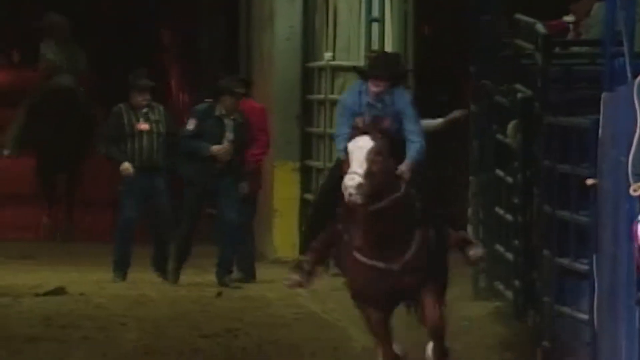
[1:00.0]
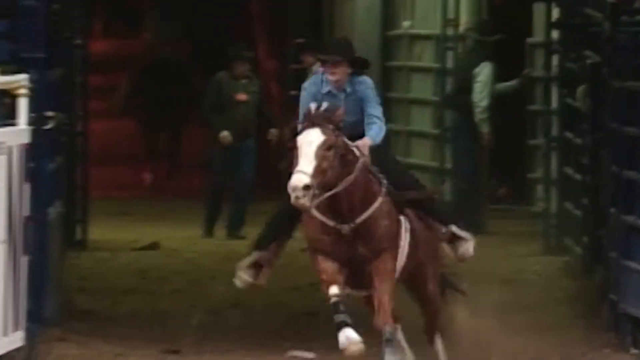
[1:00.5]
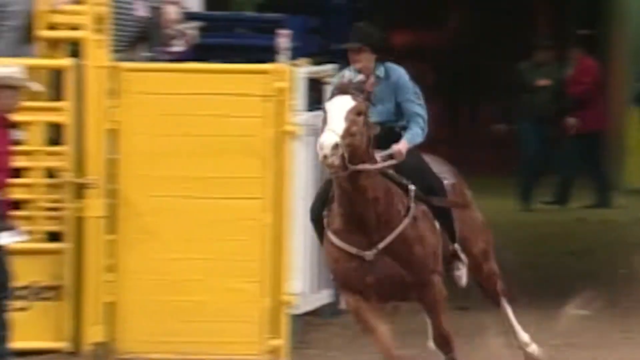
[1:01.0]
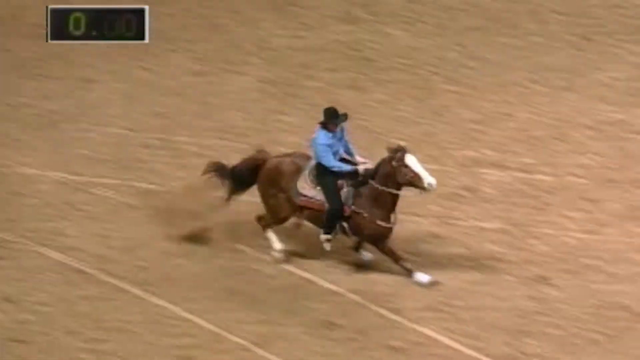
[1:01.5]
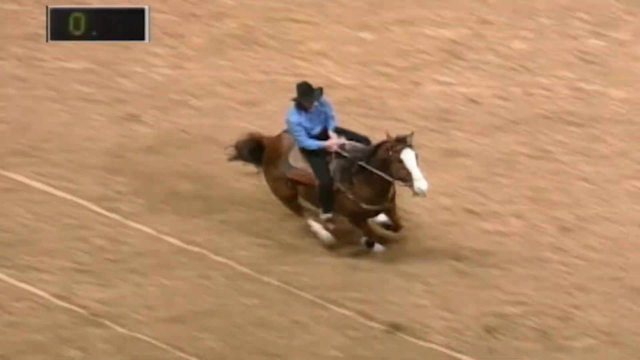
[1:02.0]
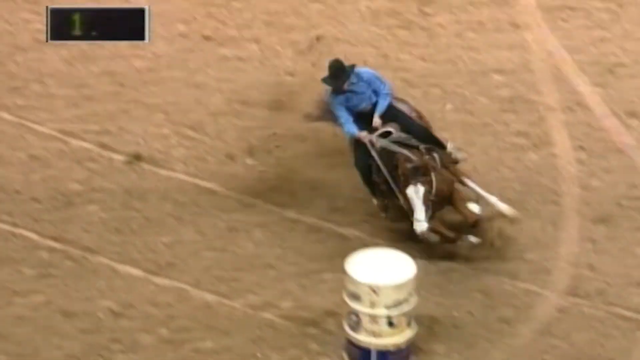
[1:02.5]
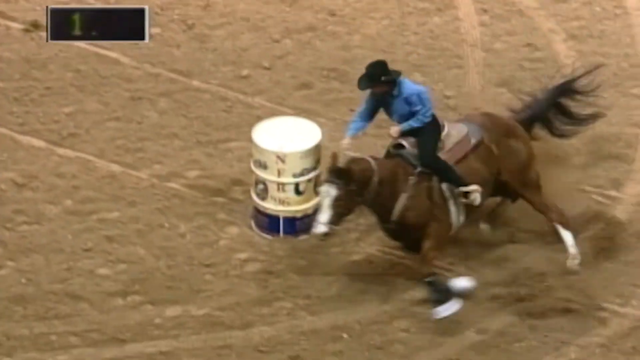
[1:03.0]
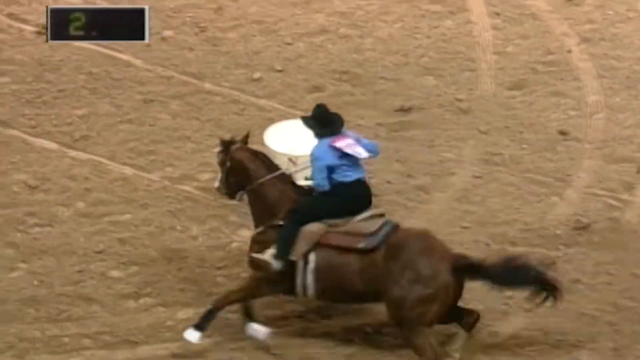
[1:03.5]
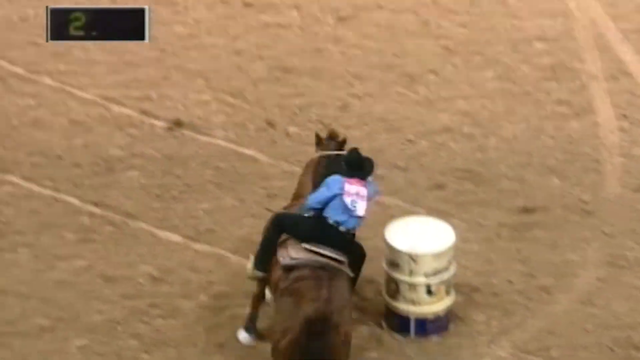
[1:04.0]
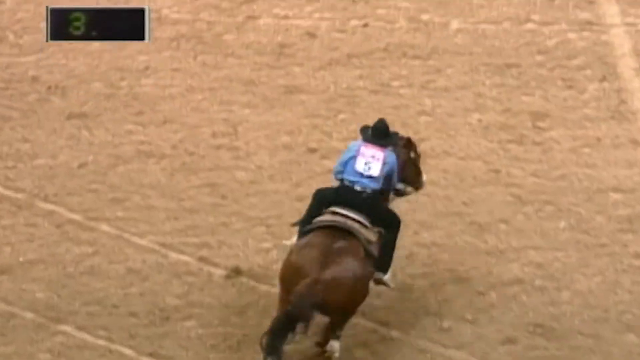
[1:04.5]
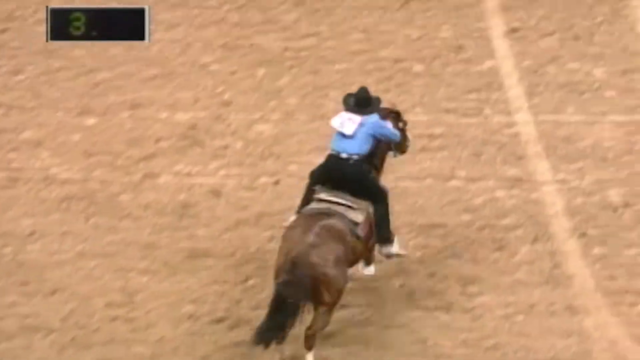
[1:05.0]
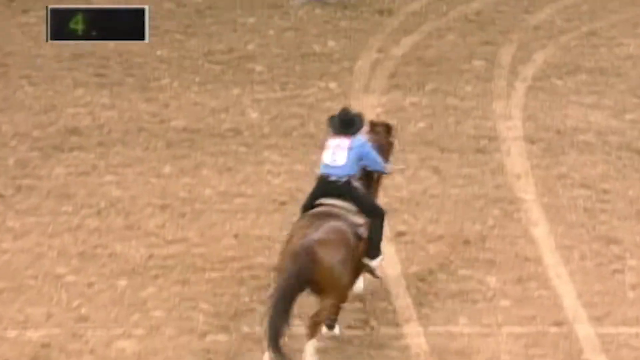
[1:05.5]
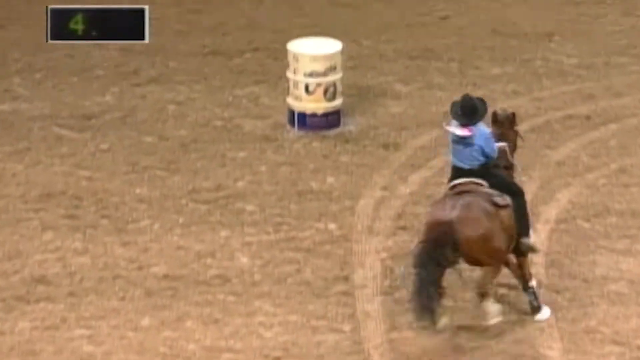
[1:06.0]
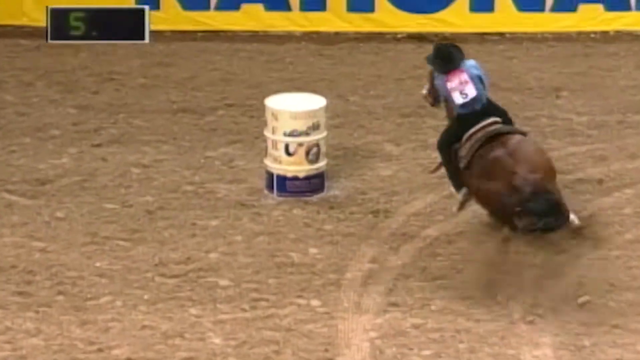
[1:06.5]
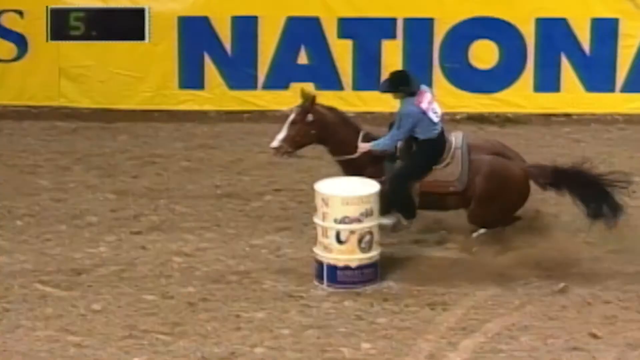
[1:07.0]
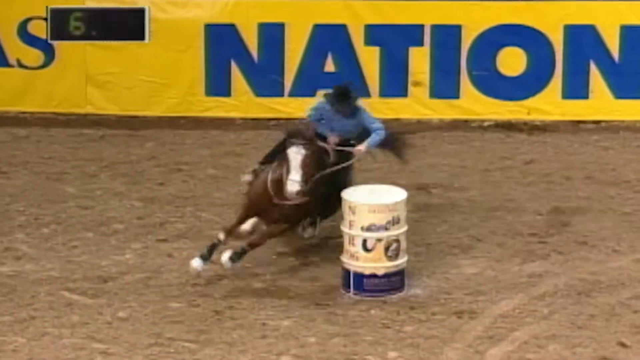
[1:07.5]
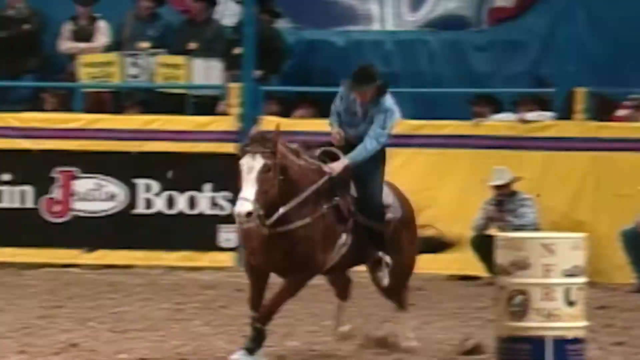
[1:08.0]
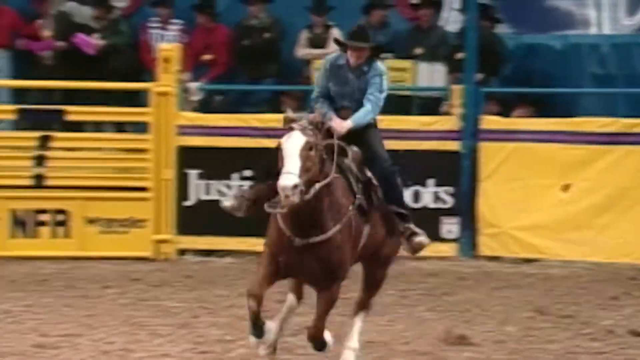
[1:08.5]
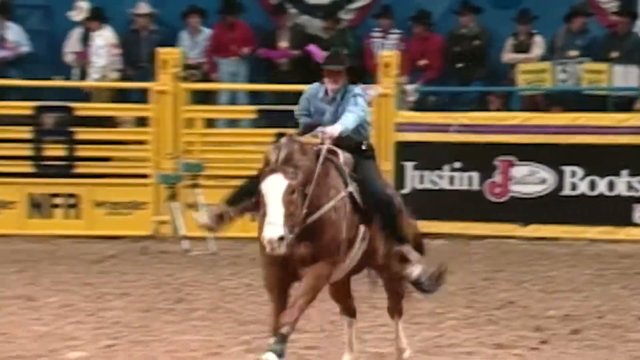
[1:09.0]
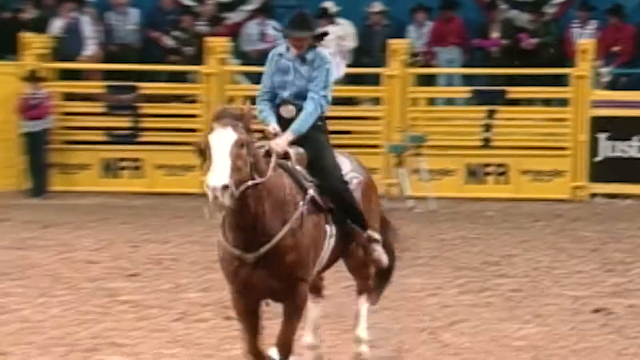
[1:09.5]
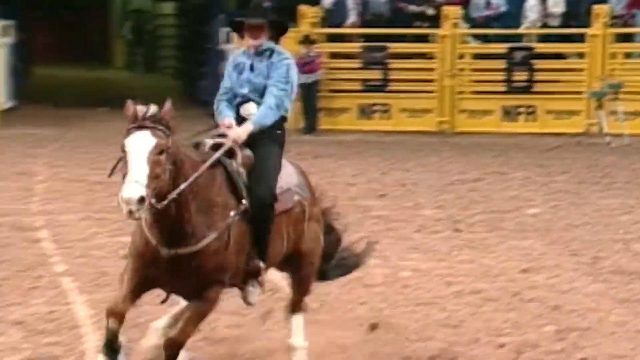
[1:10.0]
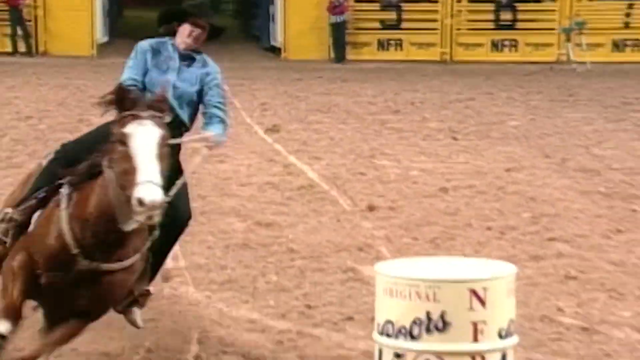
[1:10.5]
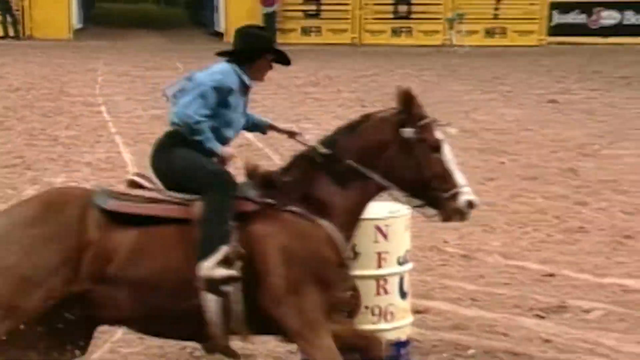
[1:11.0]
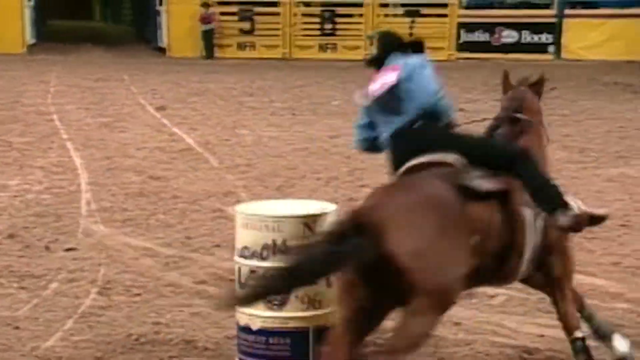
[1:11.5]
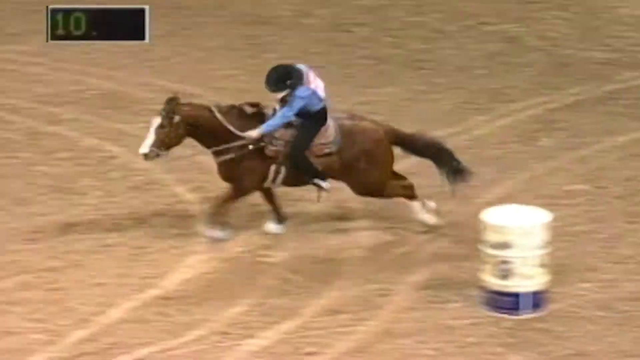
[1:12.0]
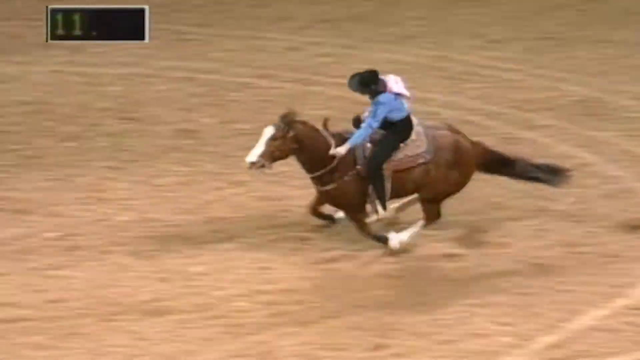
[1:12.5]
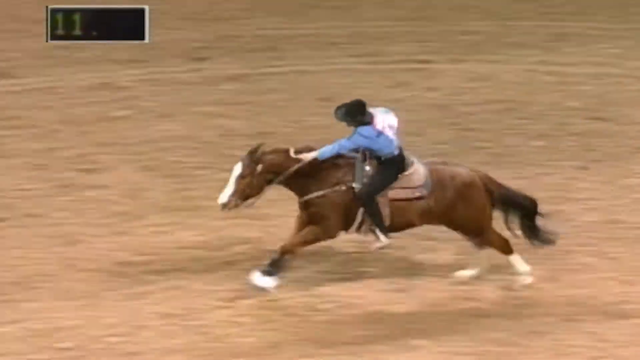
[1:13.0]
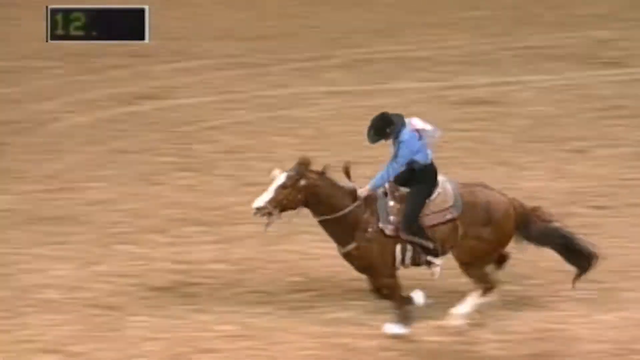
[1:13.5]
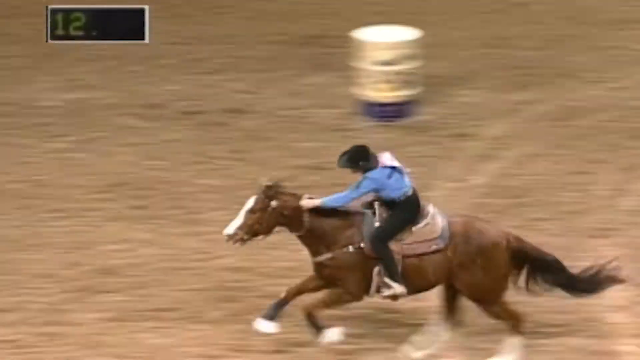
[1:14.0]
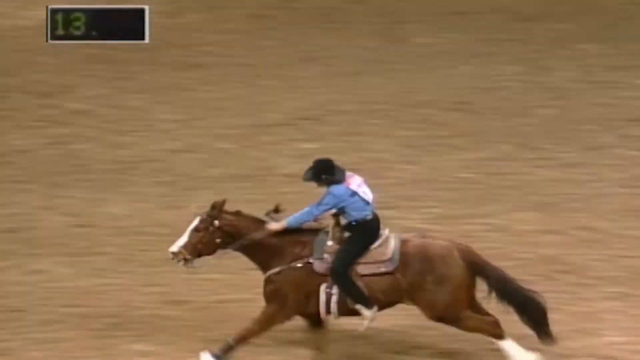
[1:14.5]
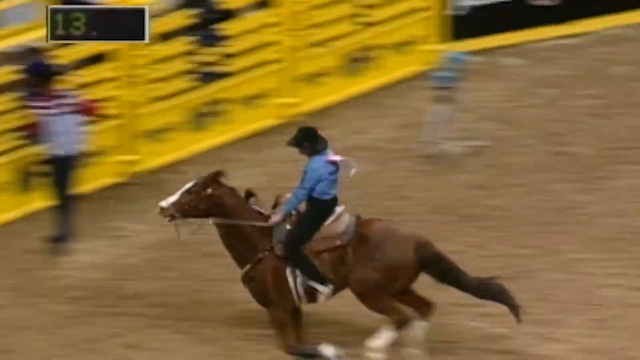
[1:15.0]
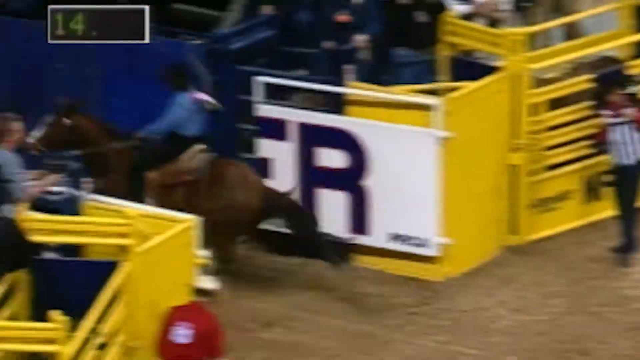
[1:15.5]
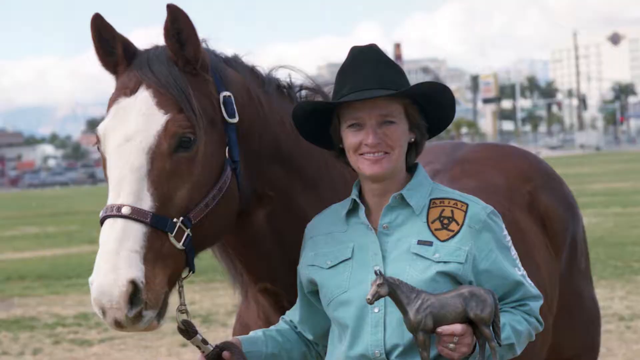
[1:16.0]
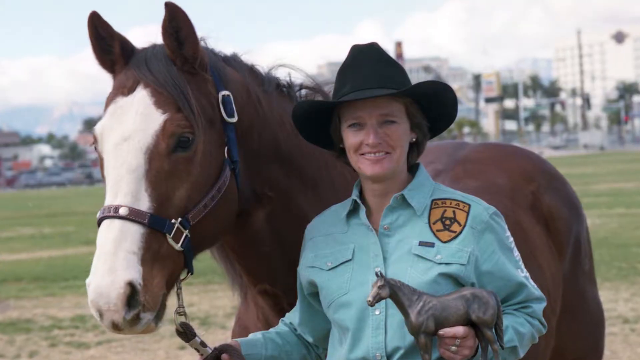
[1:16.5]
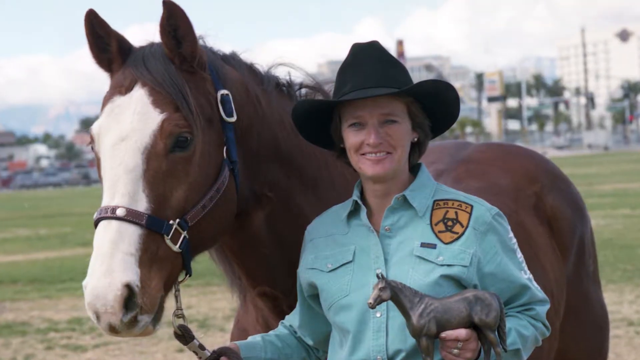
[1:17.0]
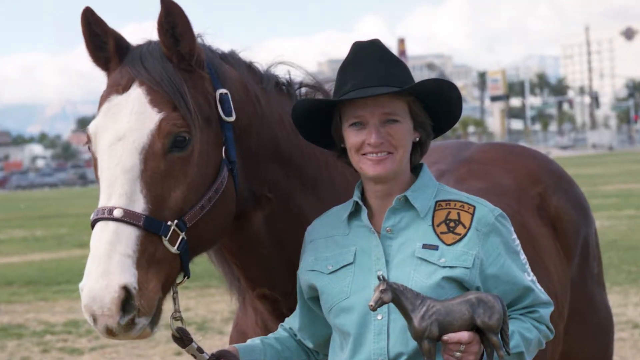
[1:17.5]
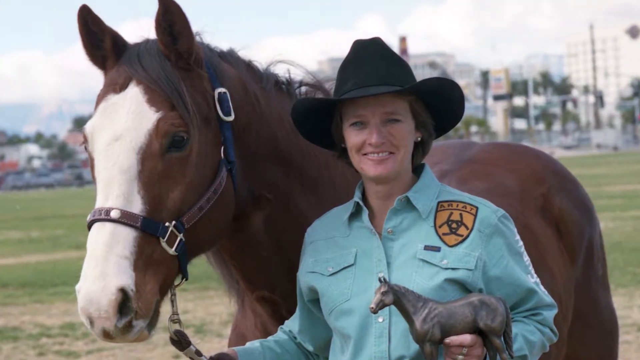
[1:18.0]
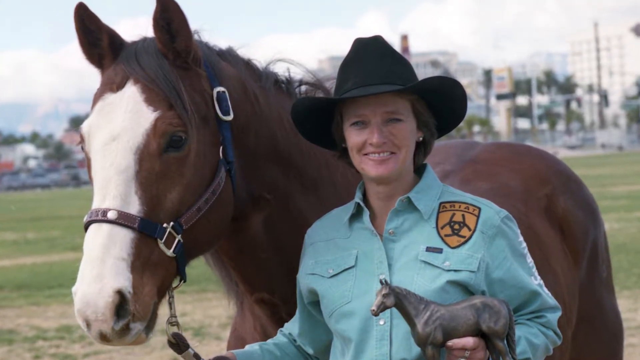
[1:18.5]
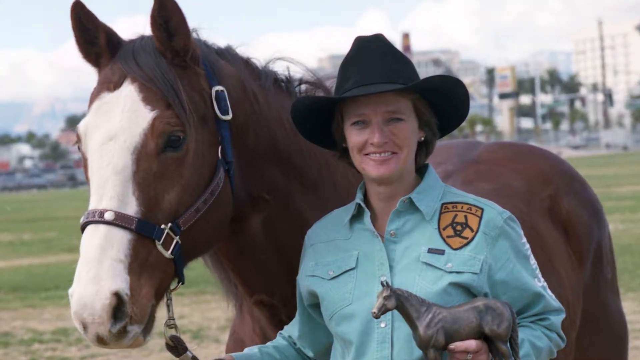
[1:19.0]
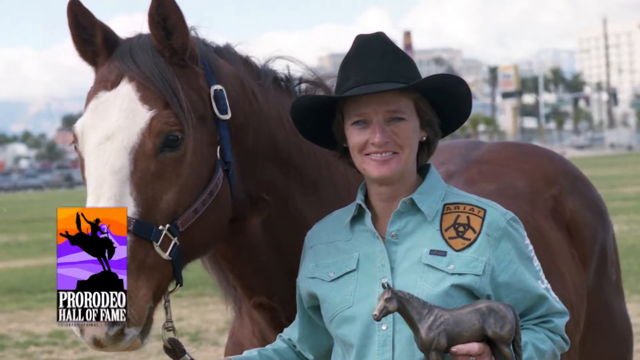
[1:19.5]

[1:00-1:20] The woman rides the horse with the white patch on its face, wearing a blue denim long-sleeved collared shirt, black pants and a black cowboy hat. This time the horse runs around the left side of the barrel, comes from the other side and goes straight up, then goes around the next barrel from the right side and comes diagonally across the field, goes from the right side of another barrel around to the other side, and heads toward the gate. She finishes with 14 seconds on the clock. Then a picture of the woman who rode these obstacles appears: she wears a light blue denim long-sleeved collared shirt and a black hat, has earrings in both ears, and smiles while looking at the camera. Her horse is to the right of her, and in her left hand she carries a trophy of a horse. On the left part of her shirt's chest is a symbol that says "Ariat". At the end of the video, text reads "Peterson Pro Rodeo Hall of Fame".